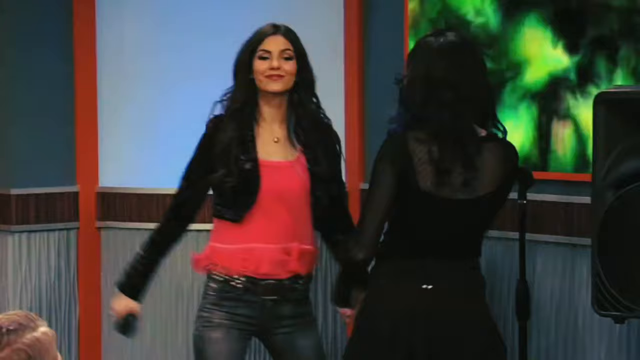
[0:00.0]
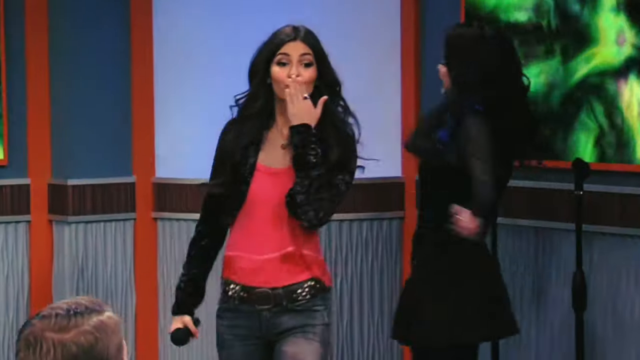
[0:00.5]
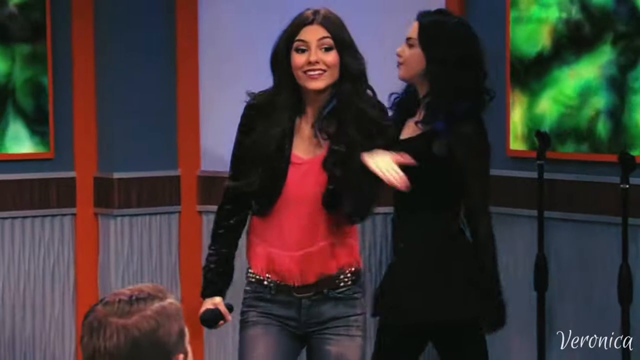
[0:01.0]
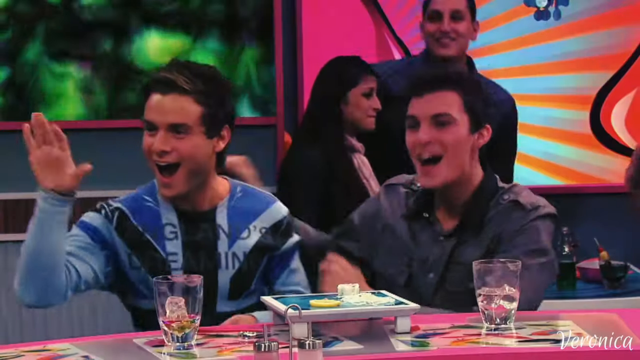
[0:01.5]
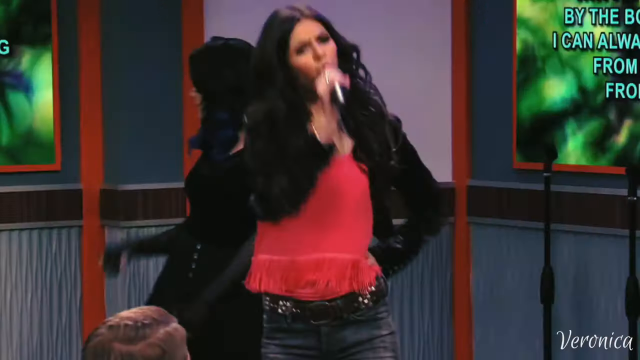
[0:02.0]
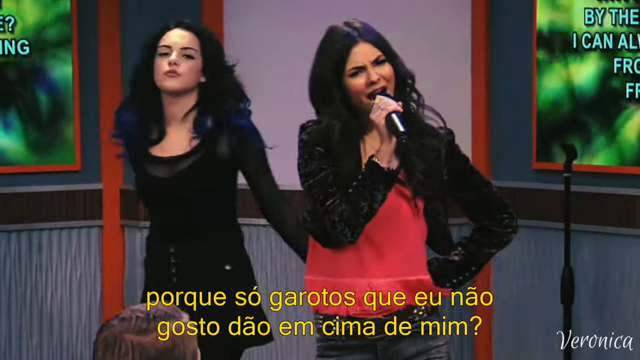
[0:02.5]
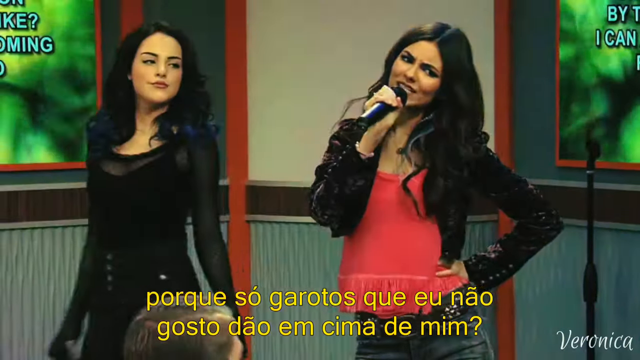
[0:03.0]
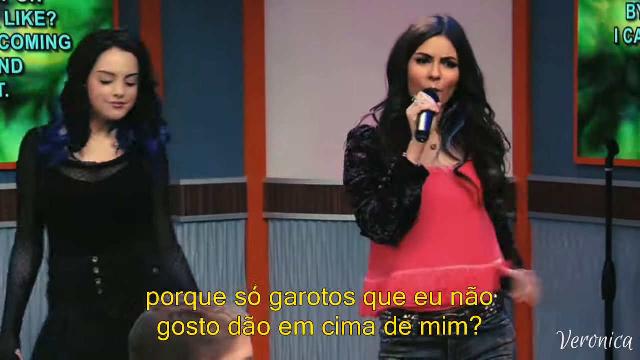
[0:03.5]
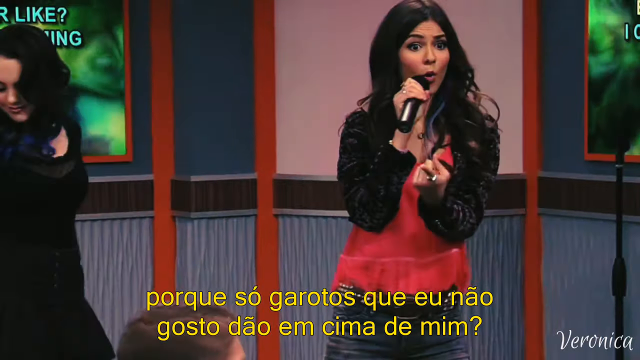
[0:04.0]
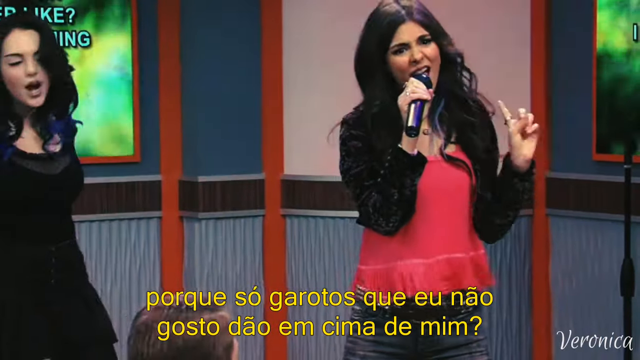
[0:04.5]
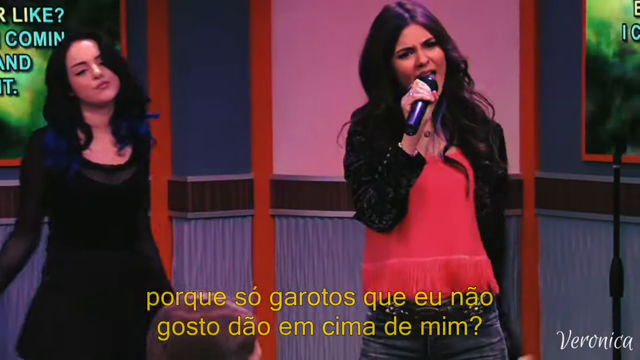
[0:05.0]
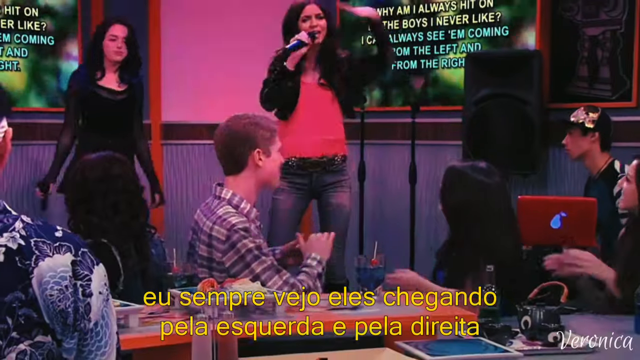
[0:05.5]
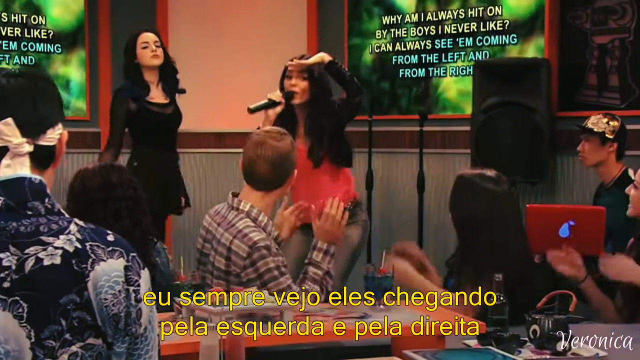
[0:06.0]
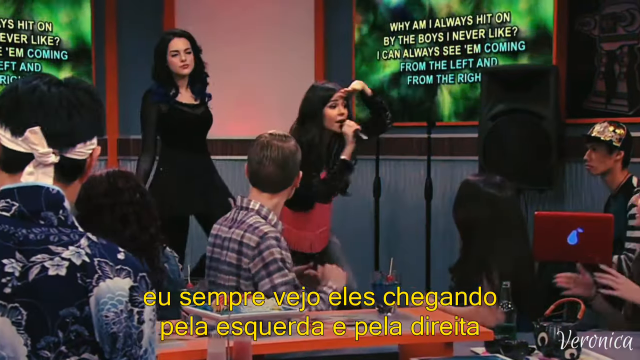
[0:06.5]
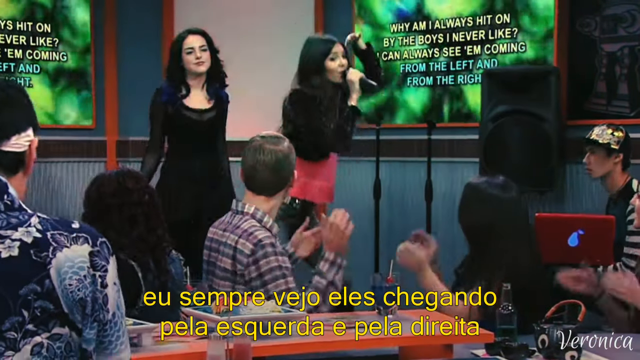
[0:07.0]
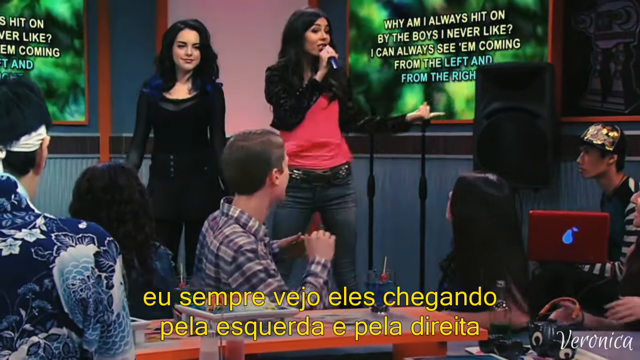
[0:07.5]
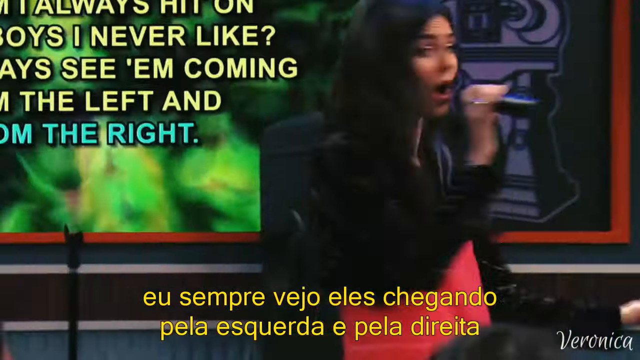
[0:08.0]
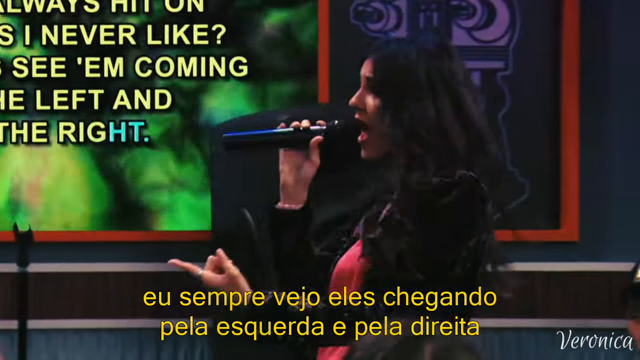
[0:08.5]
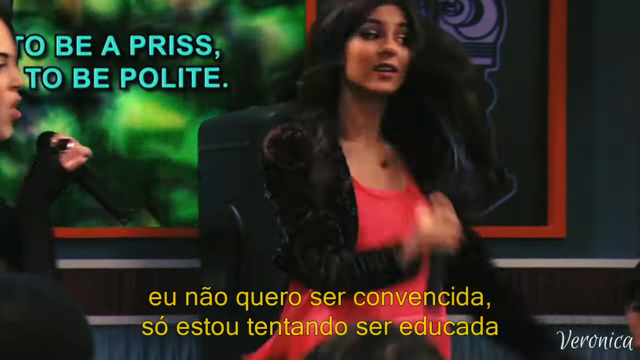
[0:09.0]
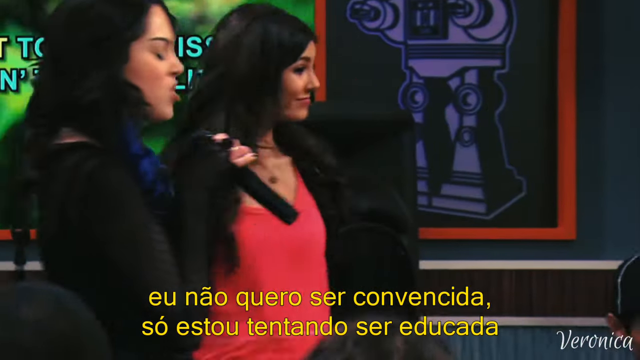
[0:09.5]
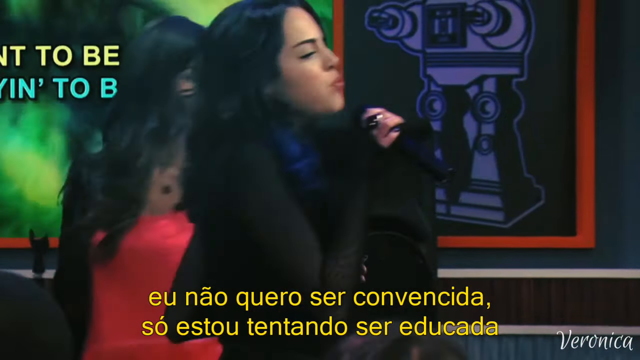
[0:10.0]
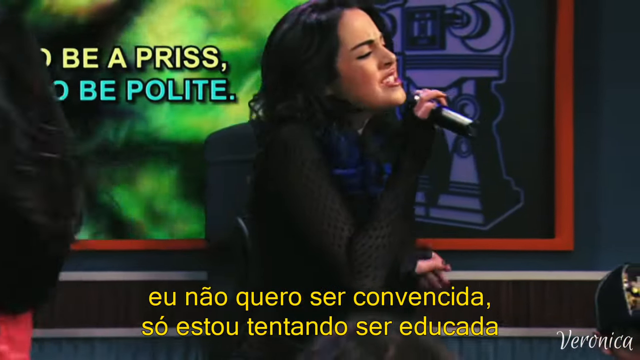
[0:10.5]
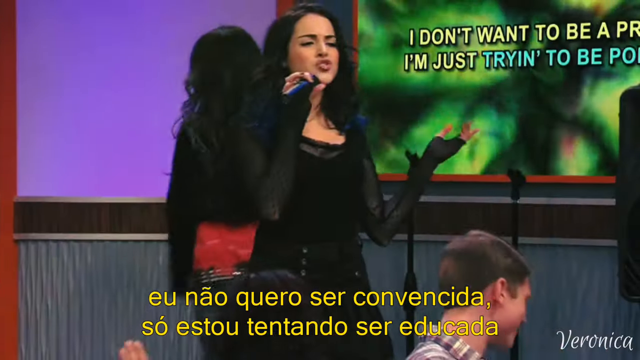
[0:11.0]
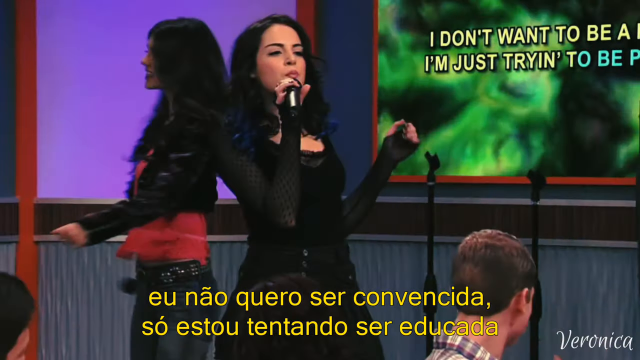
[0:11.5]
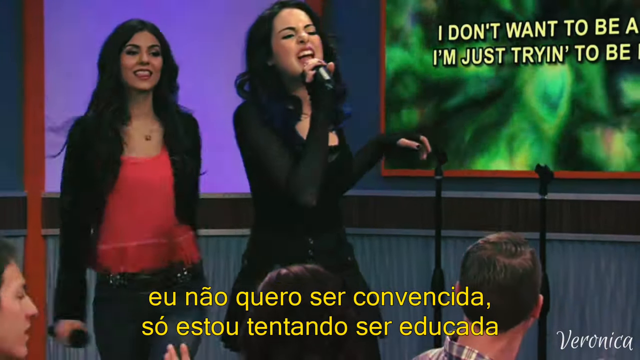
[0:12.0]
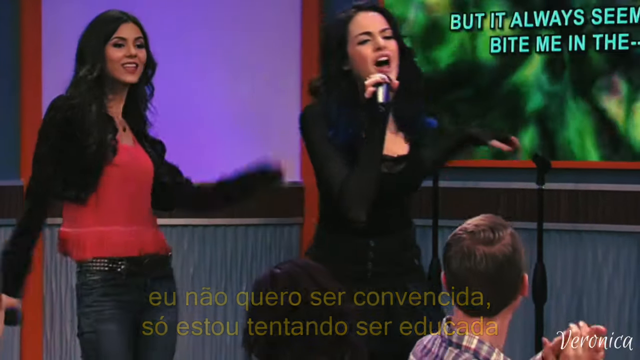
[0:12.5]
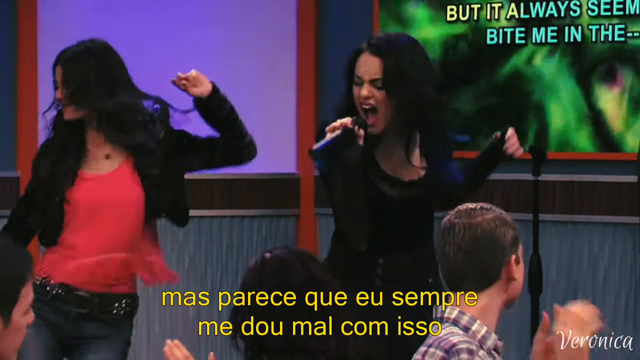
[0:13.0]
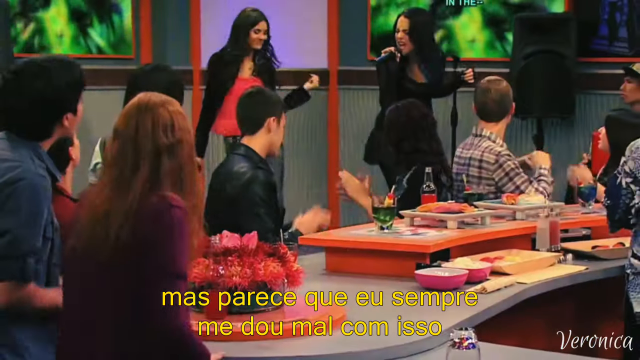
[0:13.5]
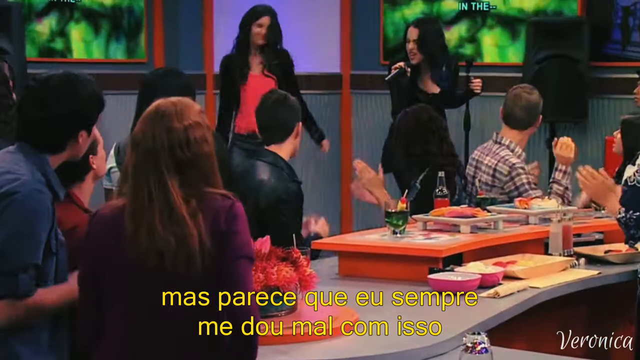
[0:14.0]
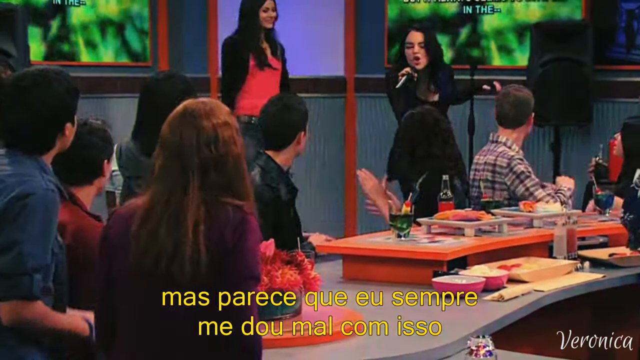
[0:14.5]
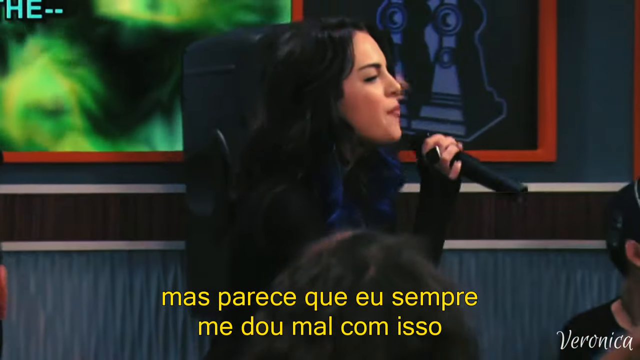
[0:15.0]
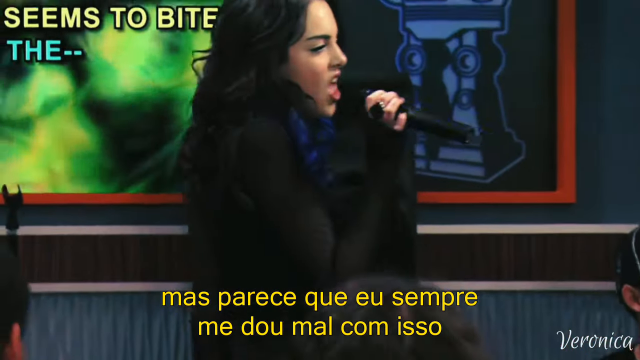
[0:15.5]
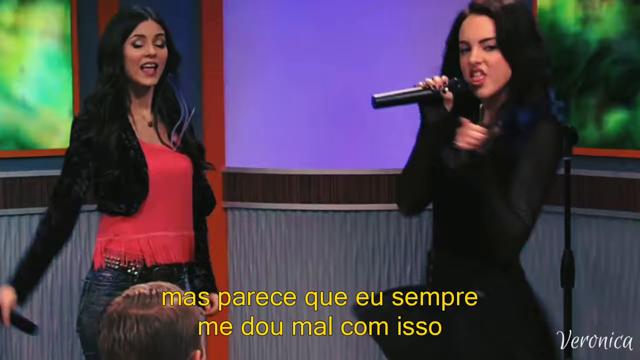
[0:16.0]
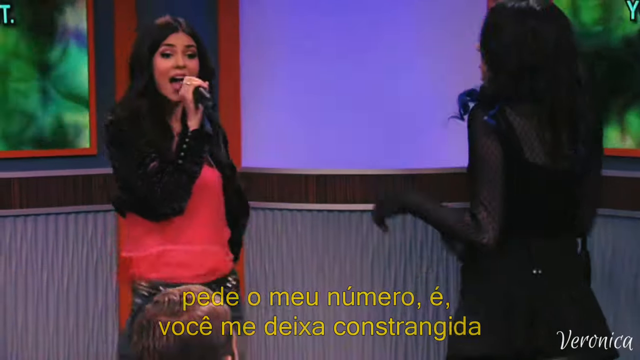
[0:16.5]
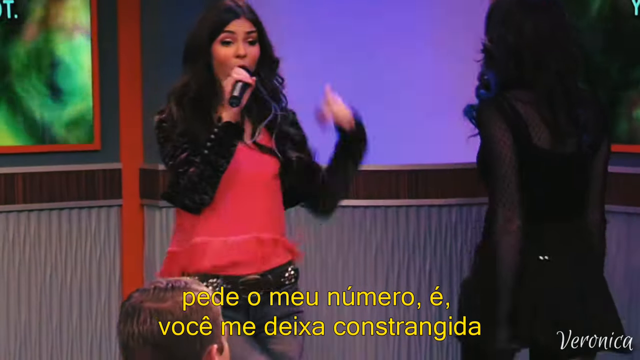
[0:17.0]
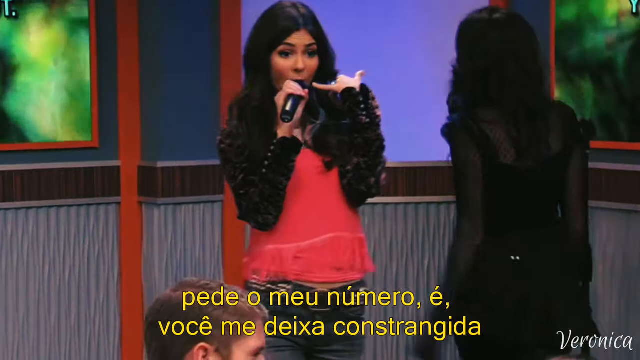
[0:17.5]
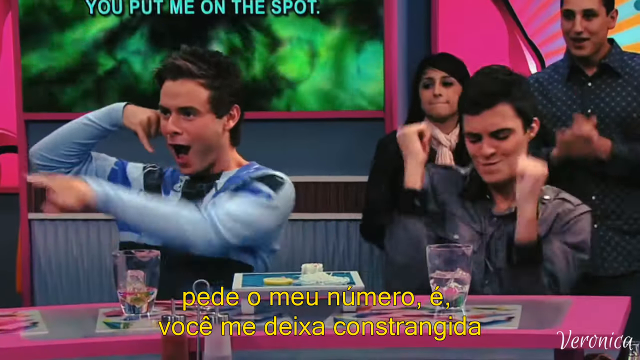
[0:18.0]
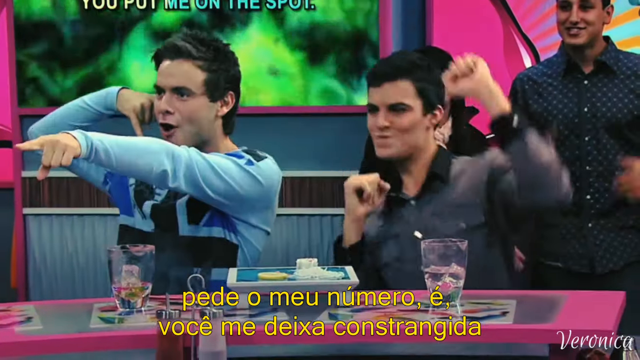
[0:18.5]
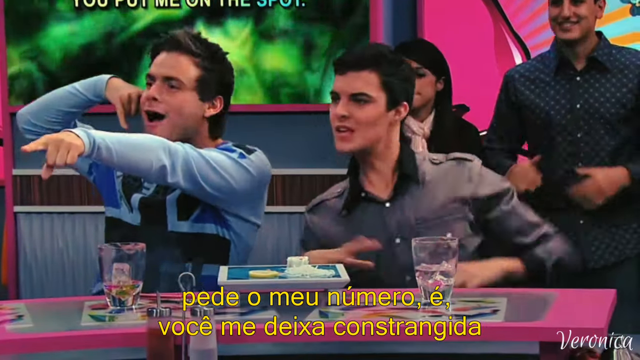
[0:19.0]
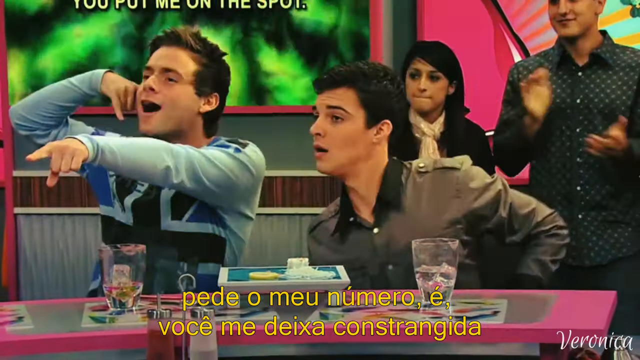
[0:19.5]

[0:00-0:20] Two women, apparently in a club or maybe a restaurant, hold microphones and sing what appears to be karaoke. The woman on the left wears a black top and what looks like black shorts; the woman on the right wears a red top with a black jacket and blue jeans. On a screen on the back wall behind them, words pop up and change from green to yellow as the lyrics go along. A couple of people in the crowd dance around and kind of clap along. The crowd is a mix of people in a variety of clothes, some in plaids, some in stripes, some with hats and some without. There appear to be tables, so the place is probably a restaurant or bar. The women bounce around singing, go back and forth, point at each other and into the crowd, and kind of dance around while the people keep clapping. The camera constantly pans back to the crowd. The women look at two guys in the crowd, point at each other, and carry on from there.